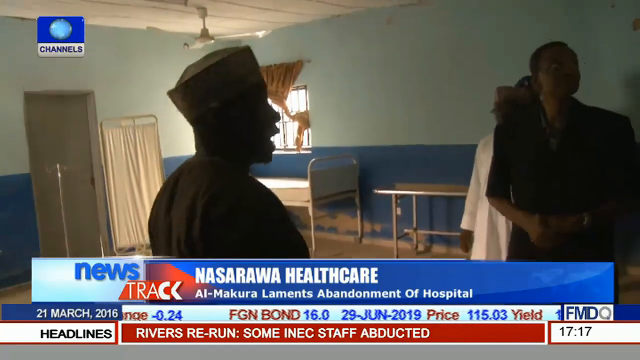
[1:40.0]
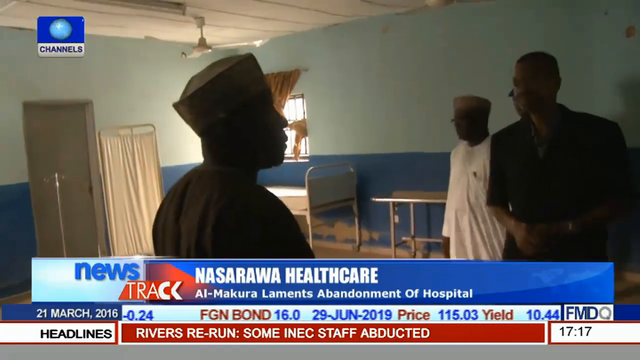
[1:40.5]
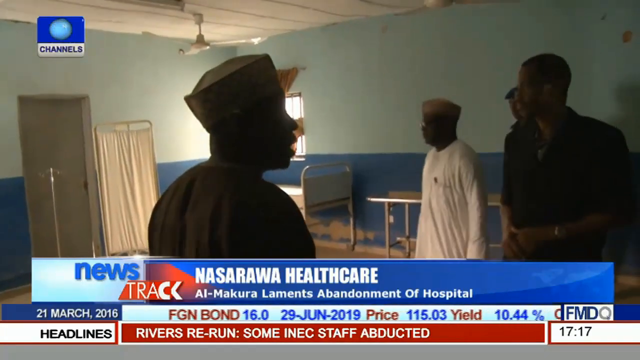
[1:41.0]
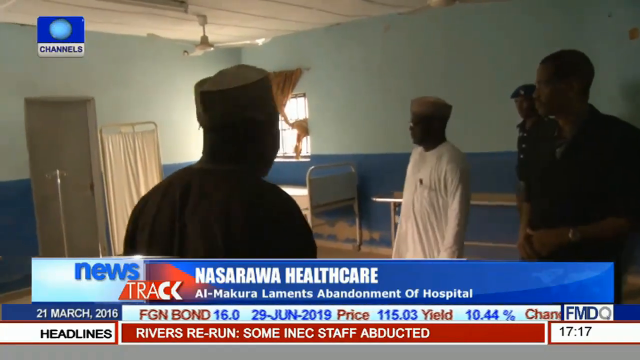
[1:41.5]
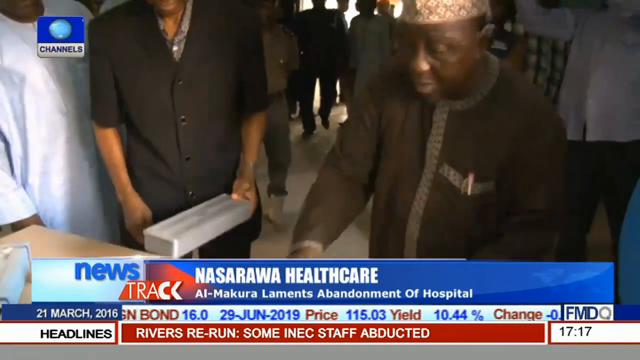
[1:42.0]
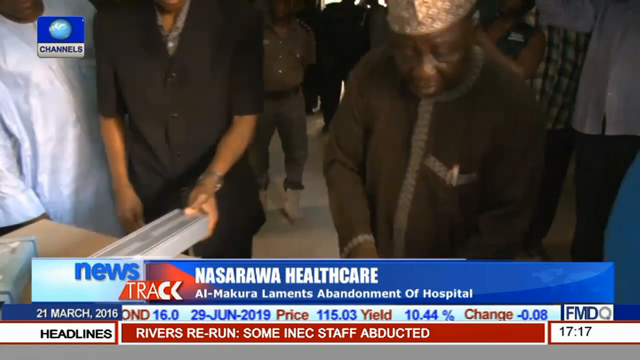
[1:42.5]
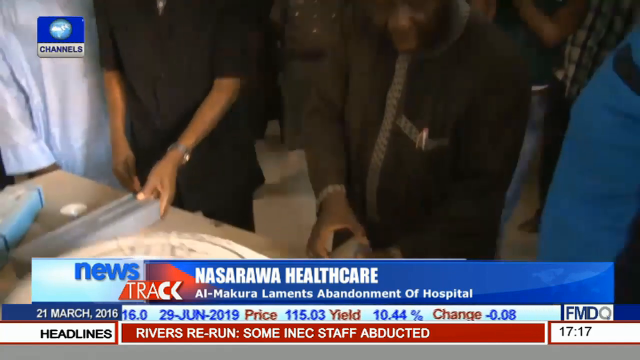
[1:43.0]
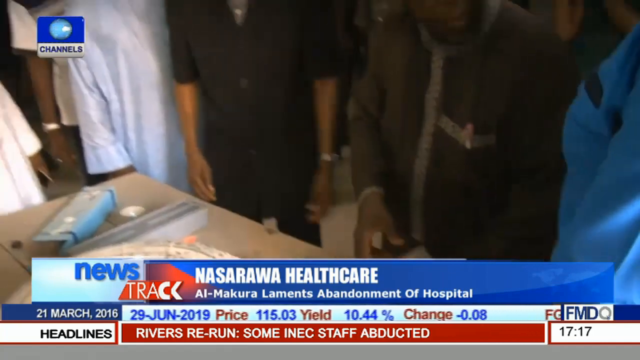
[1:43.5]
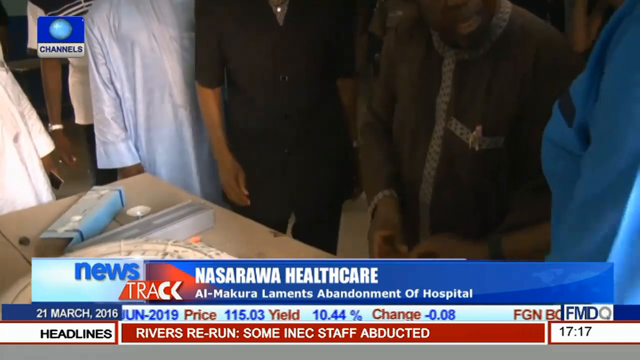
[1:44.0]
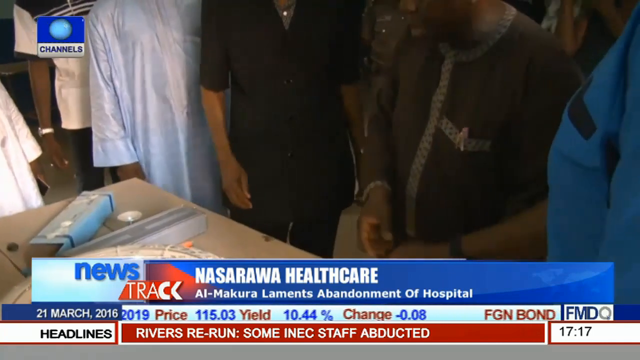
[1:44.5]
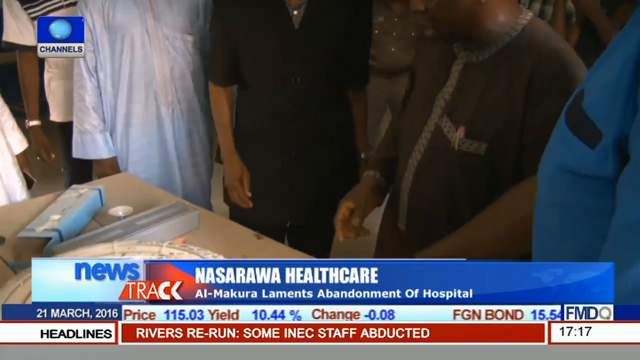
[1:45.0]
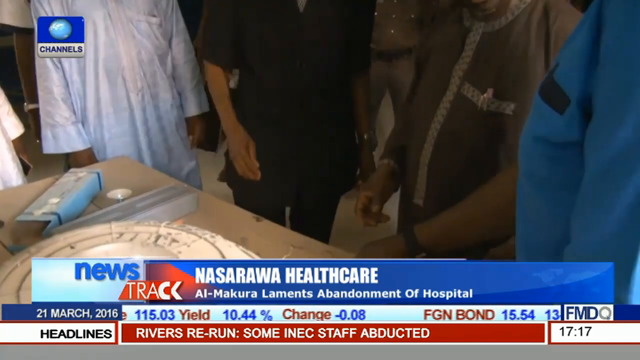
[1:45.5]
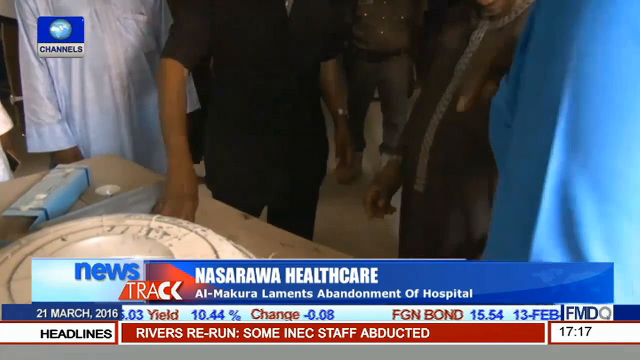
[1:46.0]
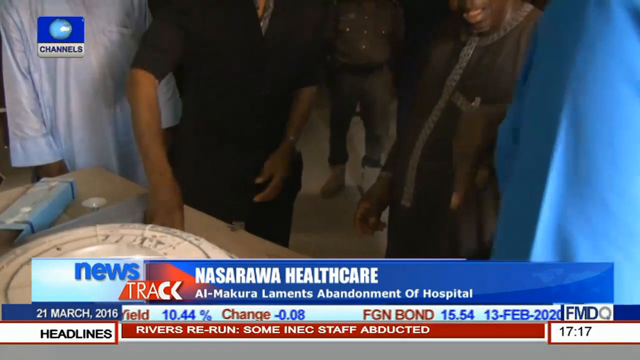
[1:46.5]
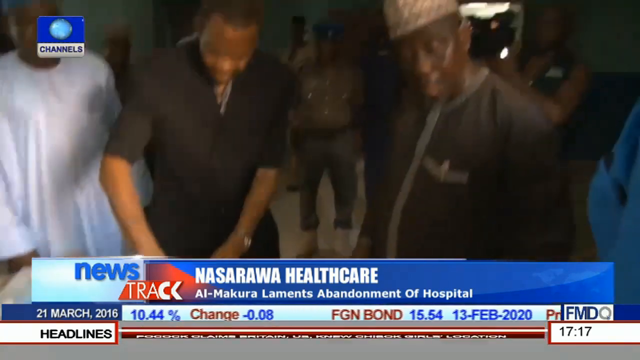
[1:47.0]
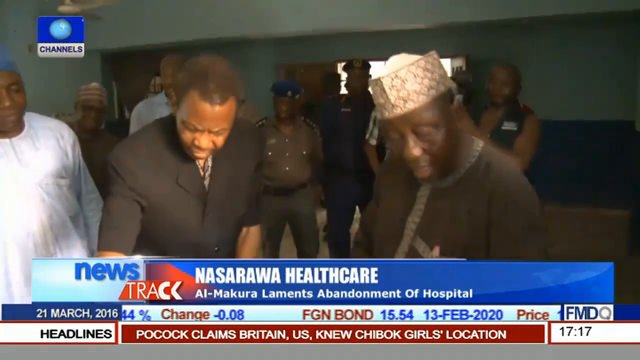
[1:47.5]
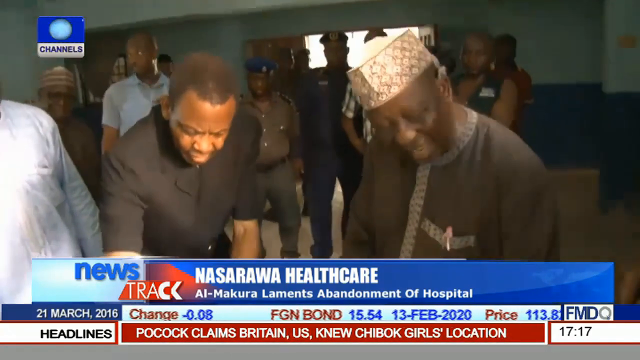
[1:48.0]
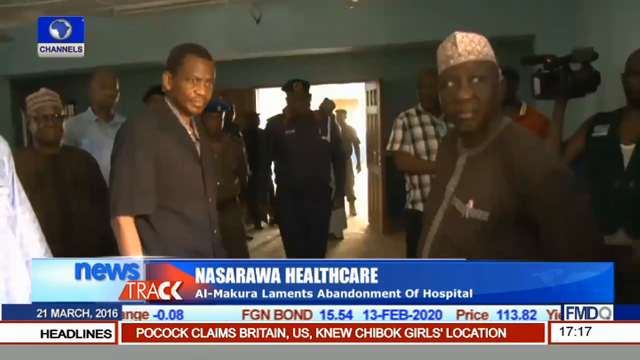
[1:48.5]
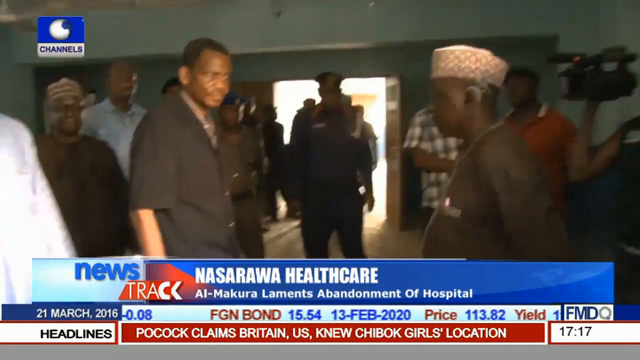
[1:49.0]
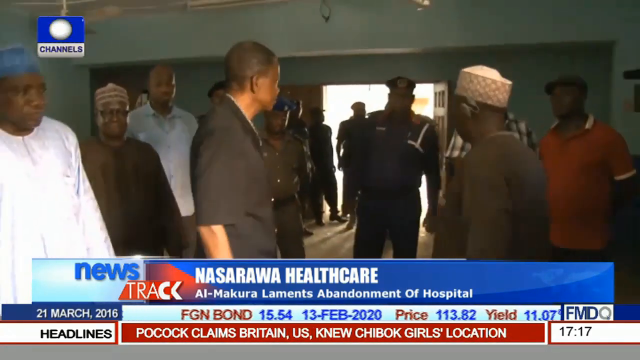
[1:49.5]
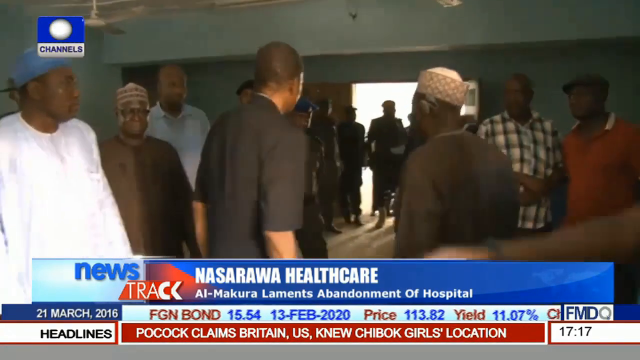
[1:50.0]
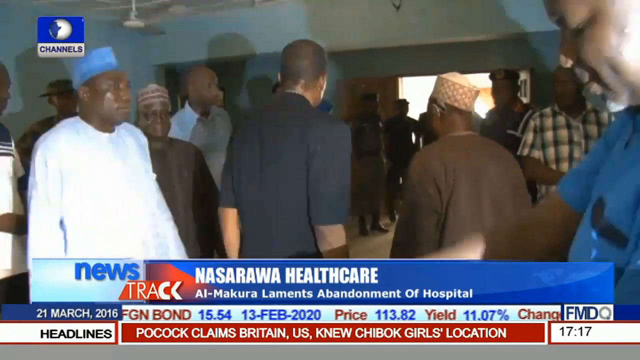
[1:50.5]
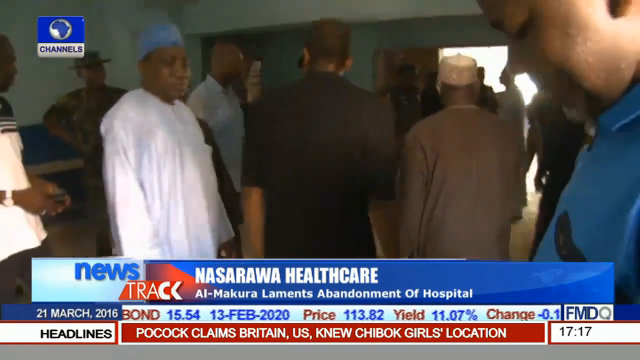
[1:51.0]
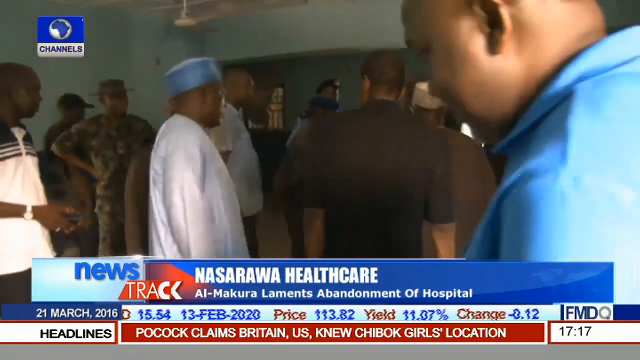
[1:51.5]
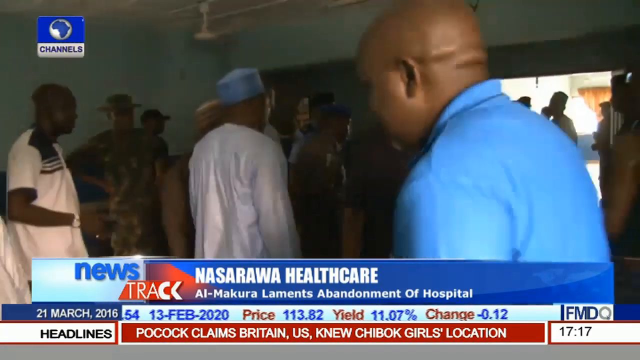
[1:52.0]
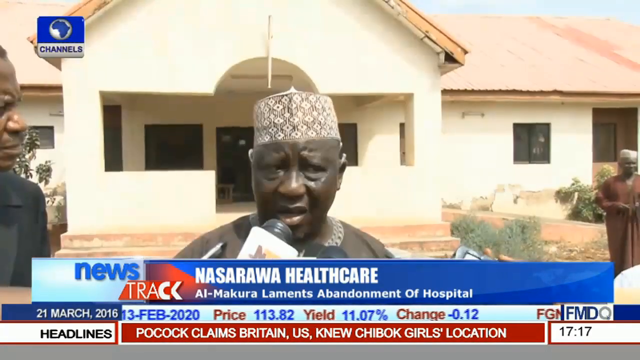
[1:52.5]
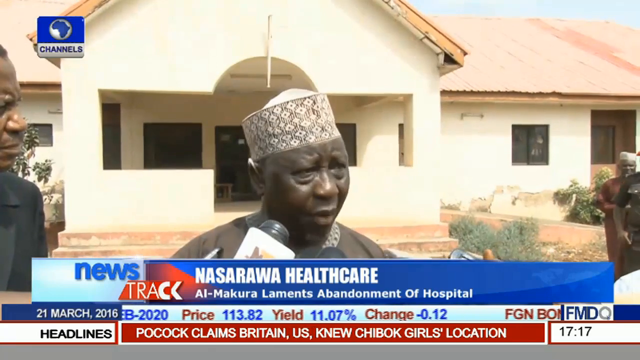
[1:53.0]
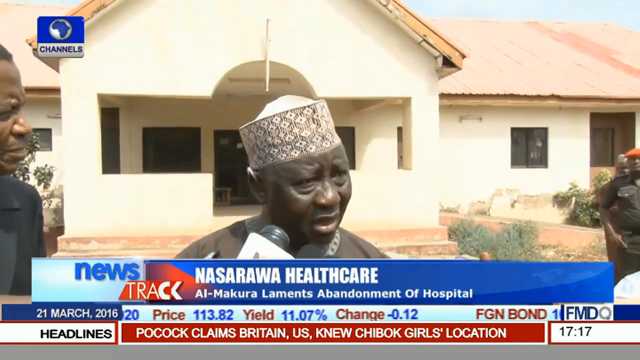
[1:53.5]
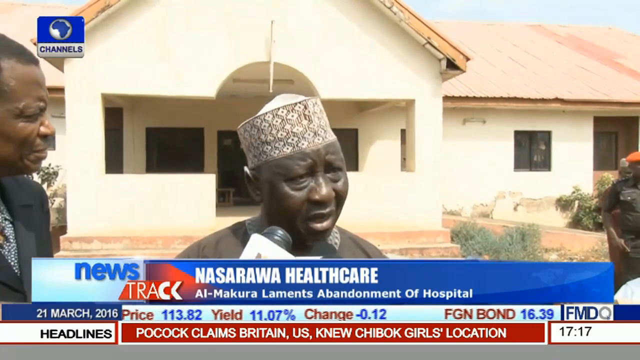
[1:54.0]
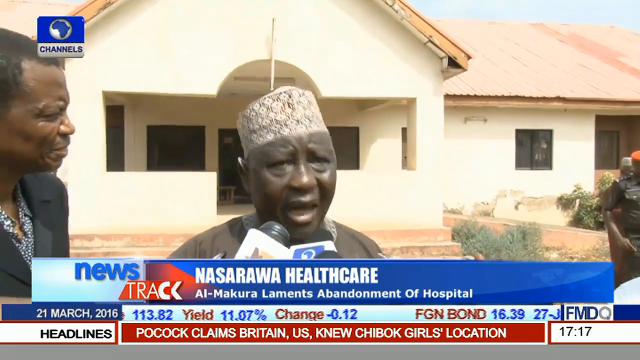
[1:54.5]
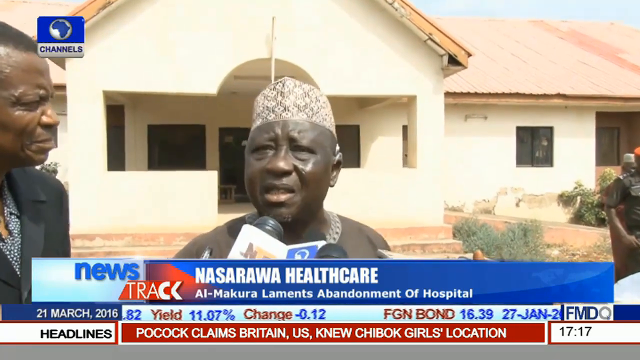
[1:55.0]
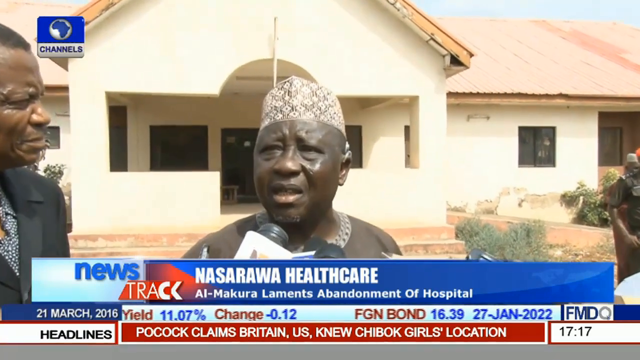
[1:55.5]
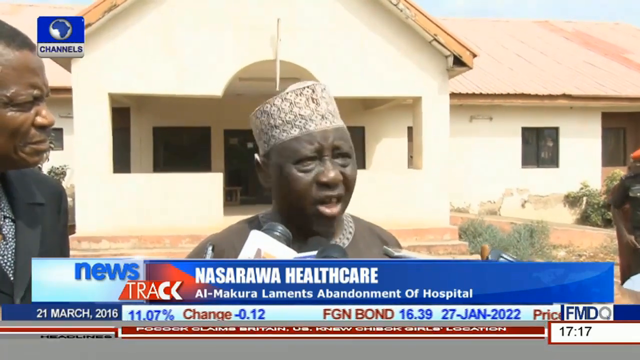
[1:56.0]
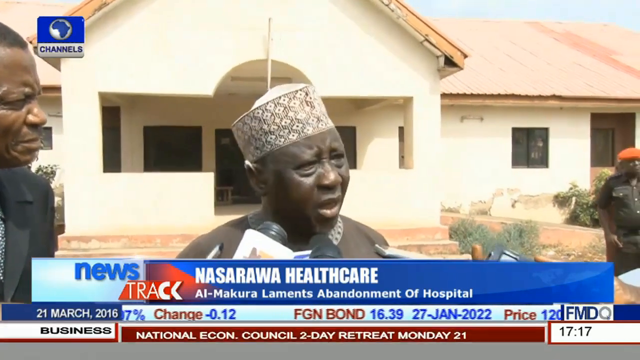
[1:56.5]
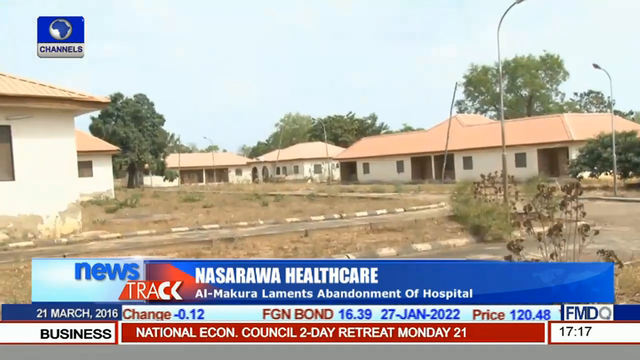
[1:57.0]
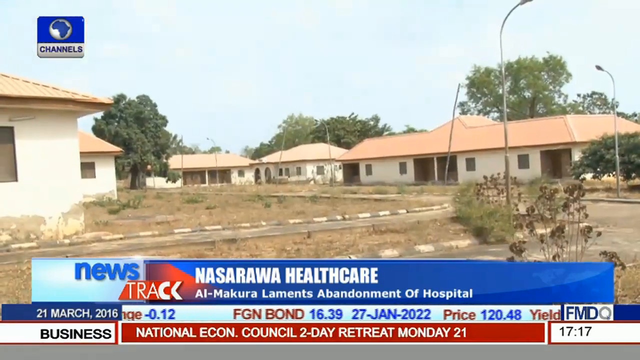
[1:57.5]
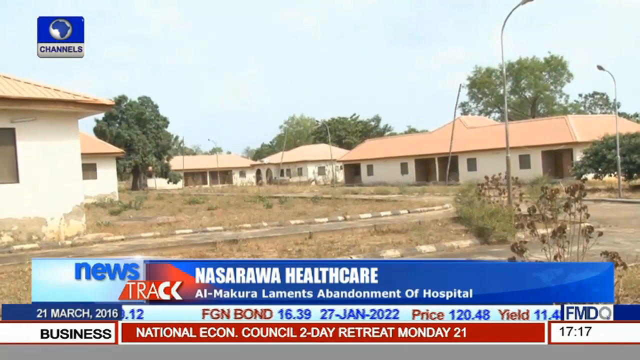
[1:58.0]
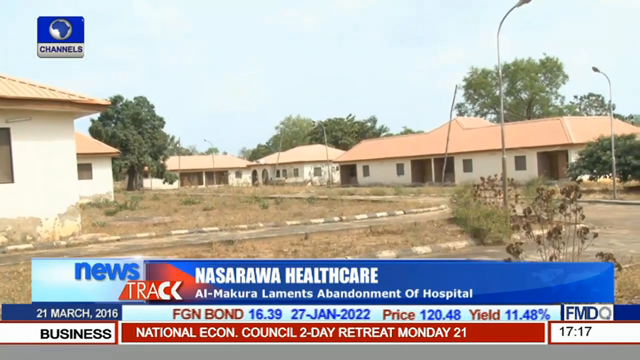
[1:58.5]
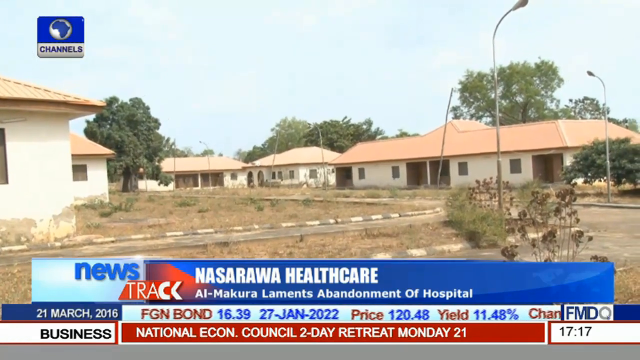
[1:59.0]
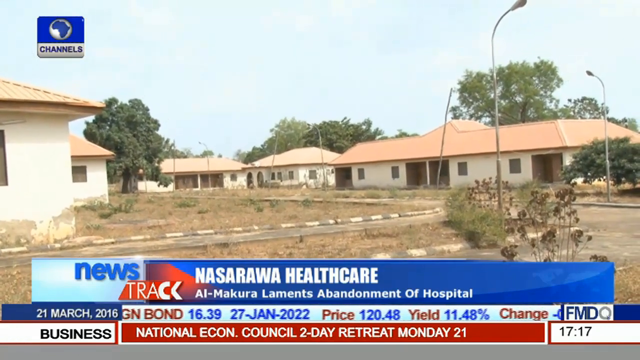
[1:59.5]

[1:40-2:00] The news program refers to the abandonment of a hospital. A man with a hat on speaks, with different men standing to his right. There is what looks like a hospital bed in the corner, some sort of room divider, and possibly something to hold IVs just to the left in the doorway. He speaks to the crowd and kind of looks around. Next, people stand at a table; one man, it looks like, uses his hands to pick something up, and another man reaches with his right arm to pick something up off the table. That man and others begin to walk out. Outside, there is more of a news conference setup, where the man speaks into several microphones held up to him. Beside him is a man who appears to be wearing a suit. The man kind of turns his head side to side as he speaks into the different microphones. Then several buildings appear in the distance.